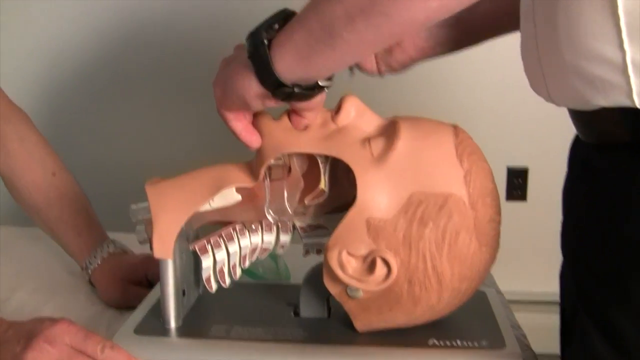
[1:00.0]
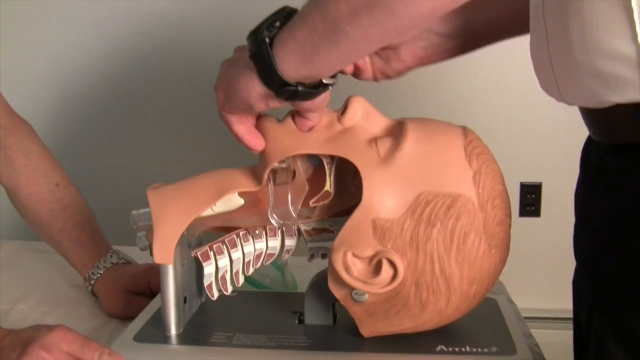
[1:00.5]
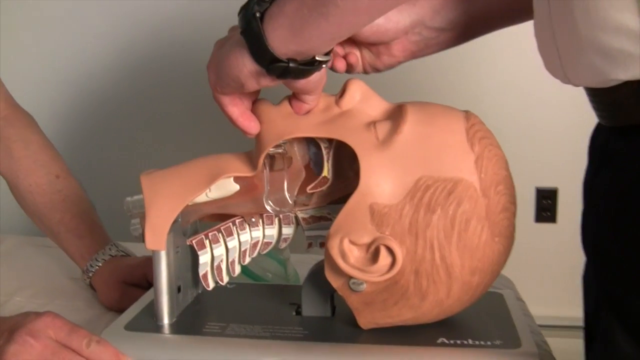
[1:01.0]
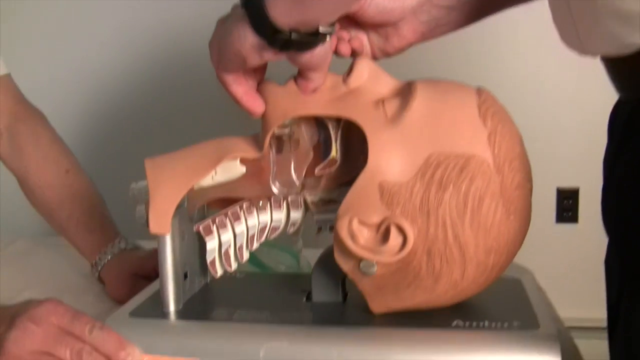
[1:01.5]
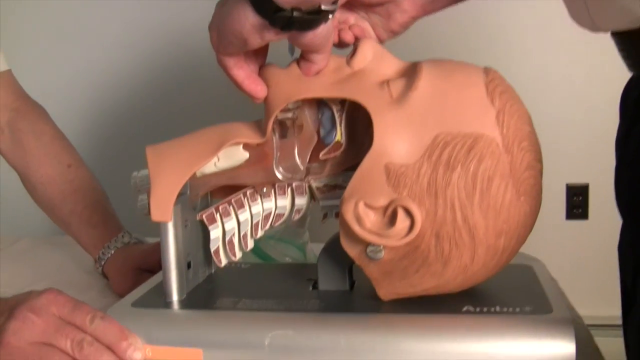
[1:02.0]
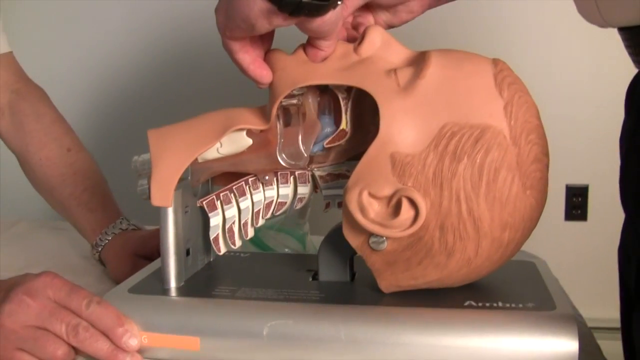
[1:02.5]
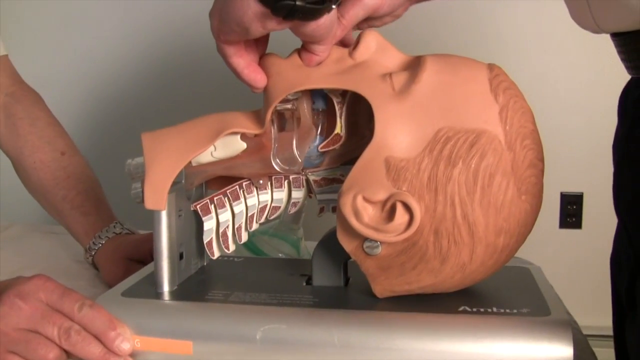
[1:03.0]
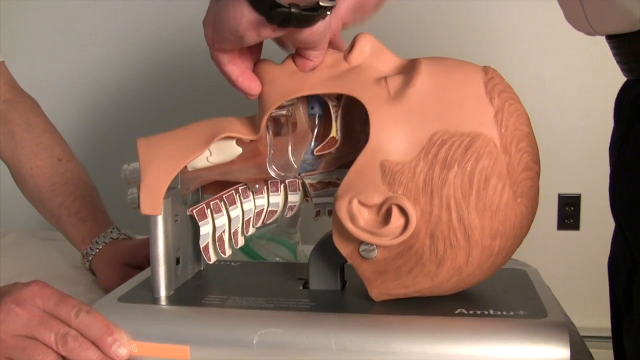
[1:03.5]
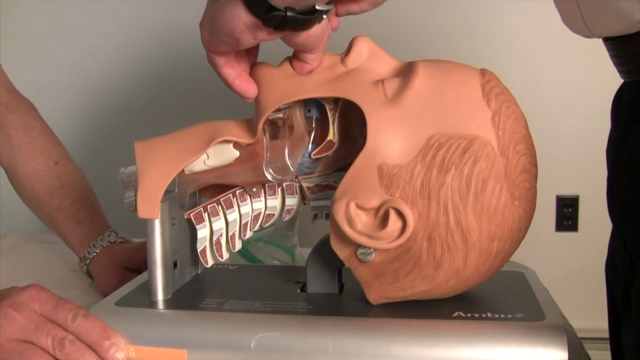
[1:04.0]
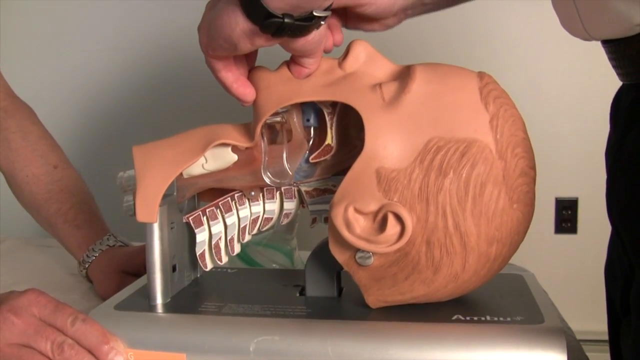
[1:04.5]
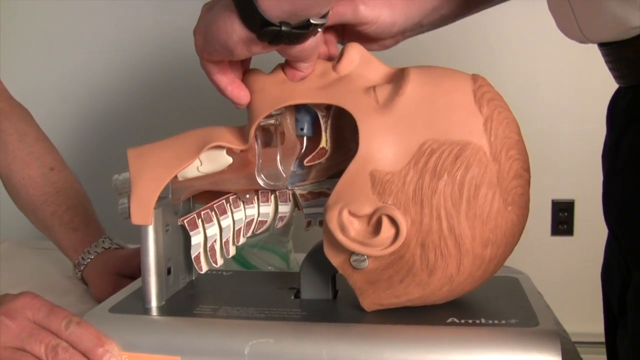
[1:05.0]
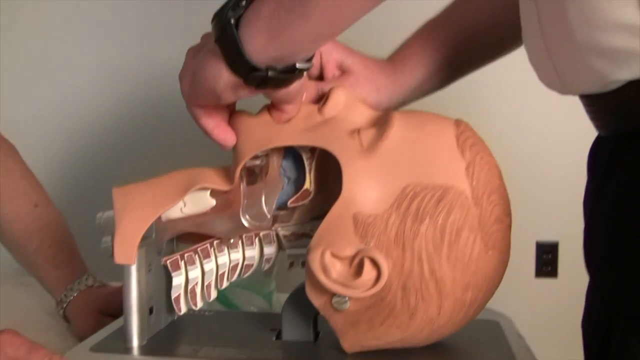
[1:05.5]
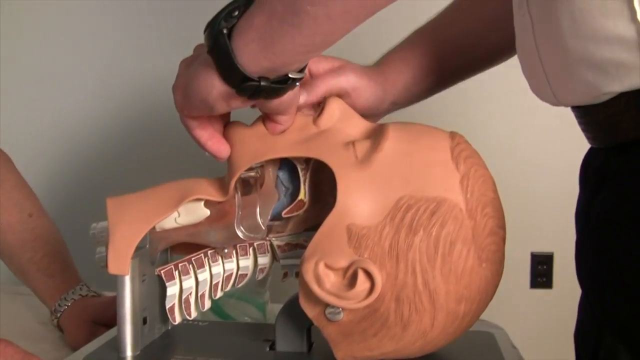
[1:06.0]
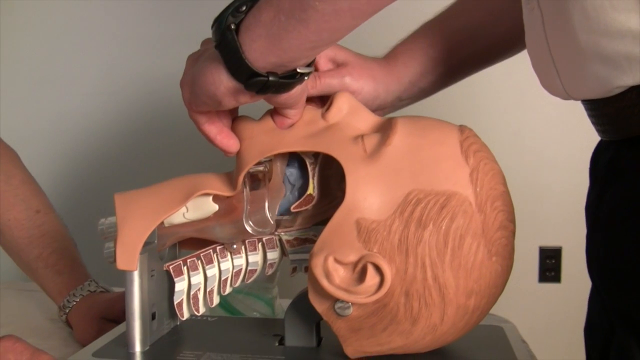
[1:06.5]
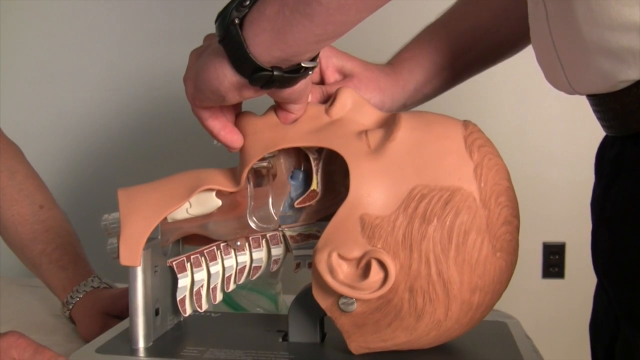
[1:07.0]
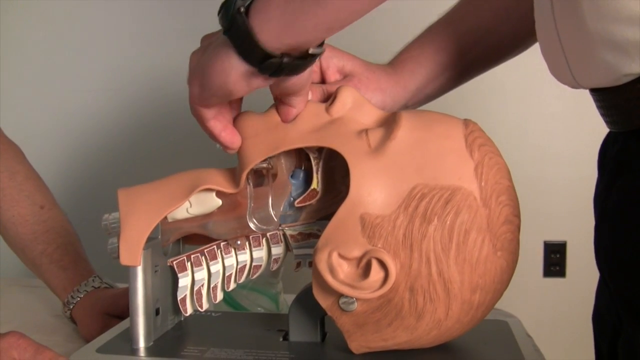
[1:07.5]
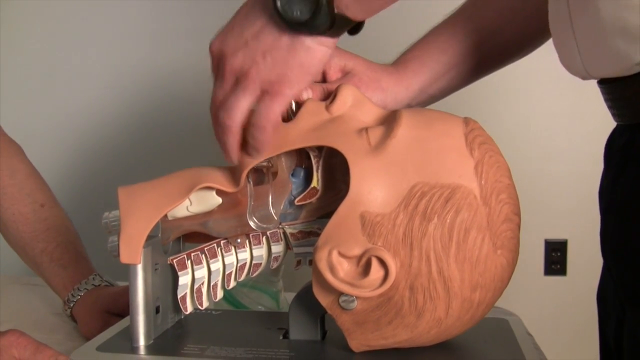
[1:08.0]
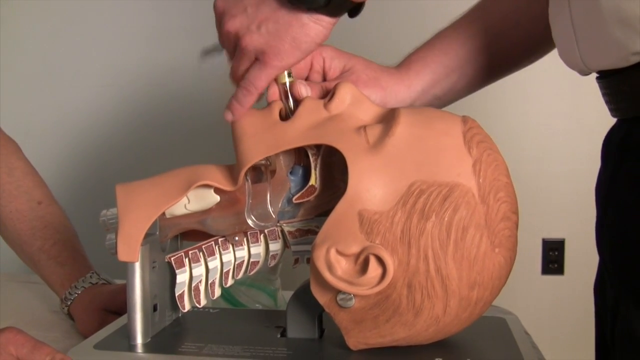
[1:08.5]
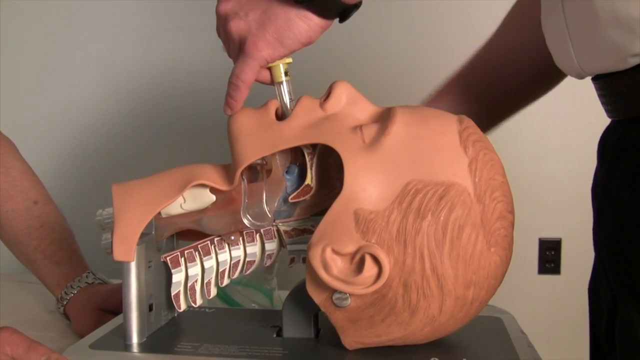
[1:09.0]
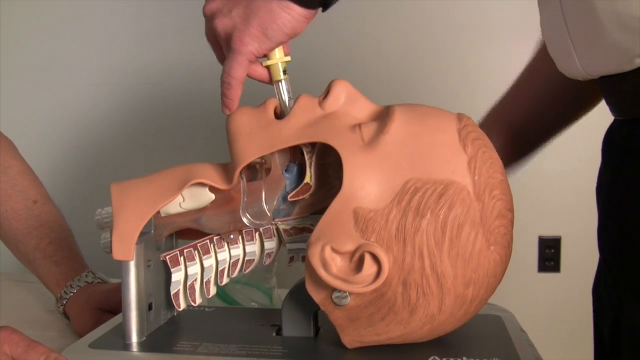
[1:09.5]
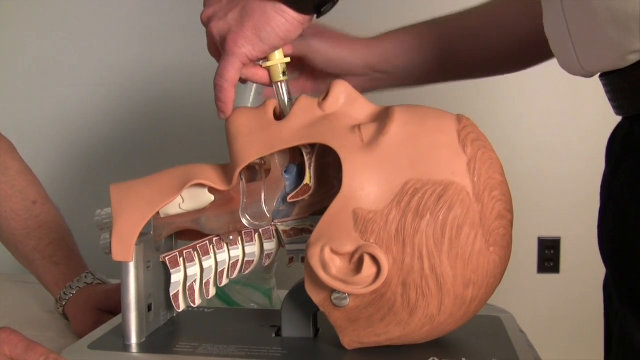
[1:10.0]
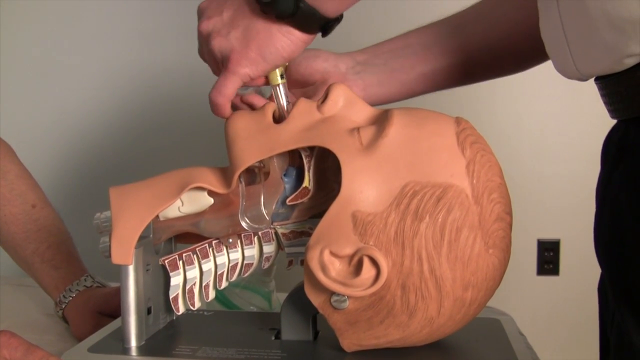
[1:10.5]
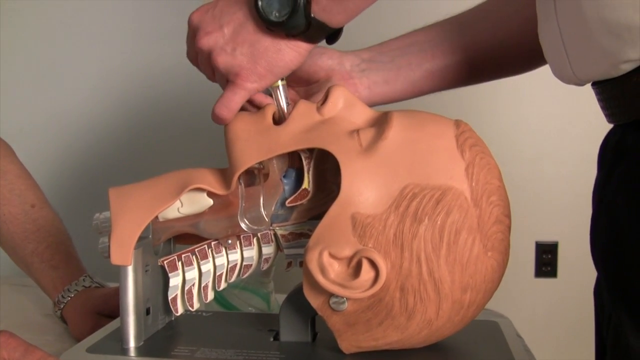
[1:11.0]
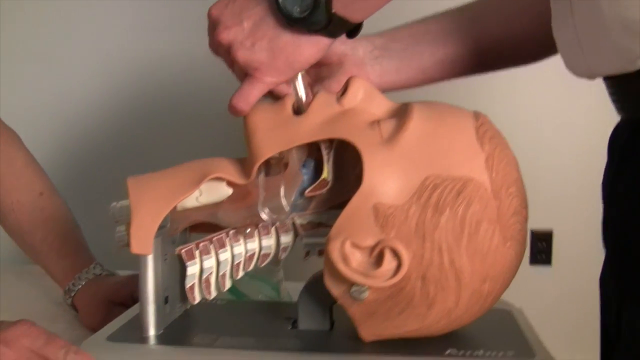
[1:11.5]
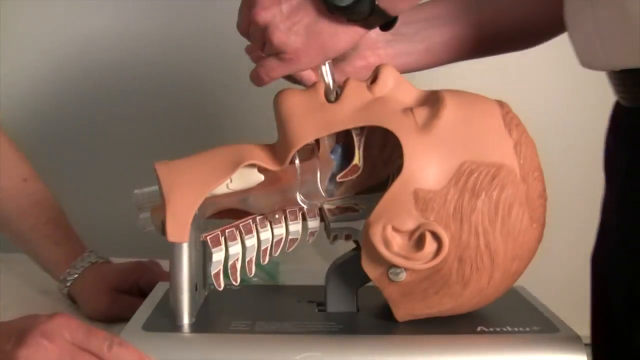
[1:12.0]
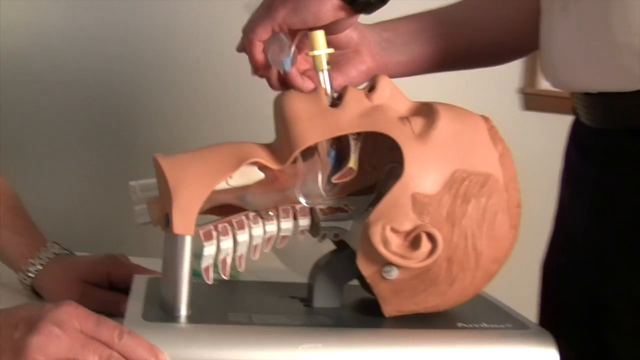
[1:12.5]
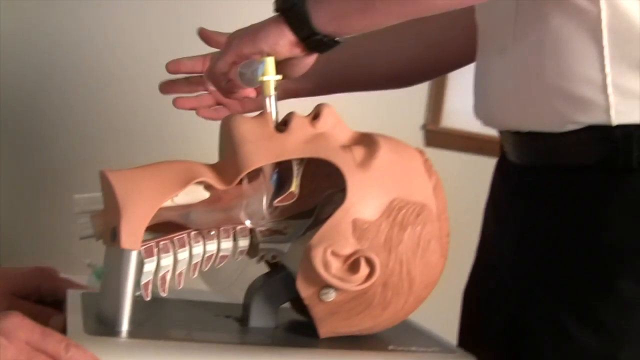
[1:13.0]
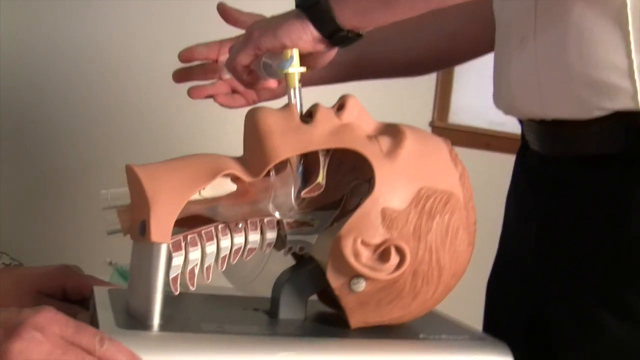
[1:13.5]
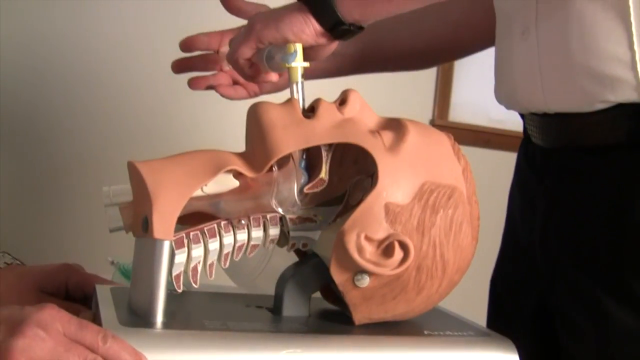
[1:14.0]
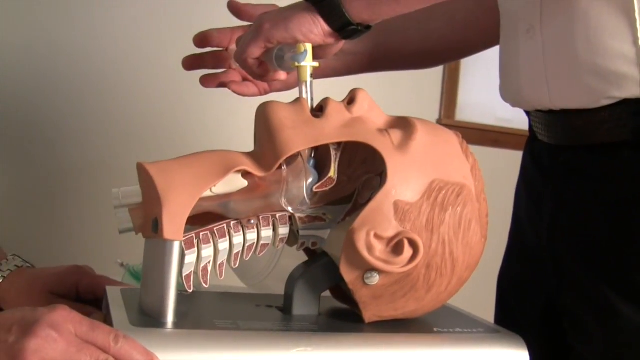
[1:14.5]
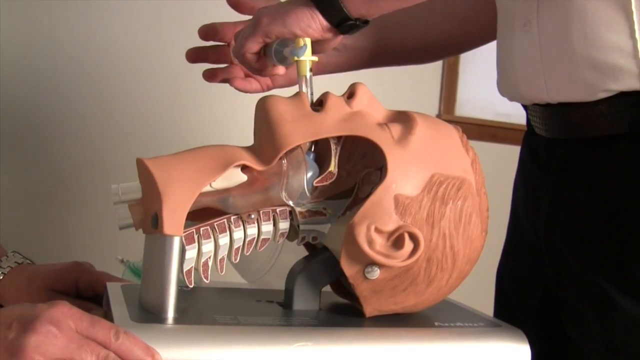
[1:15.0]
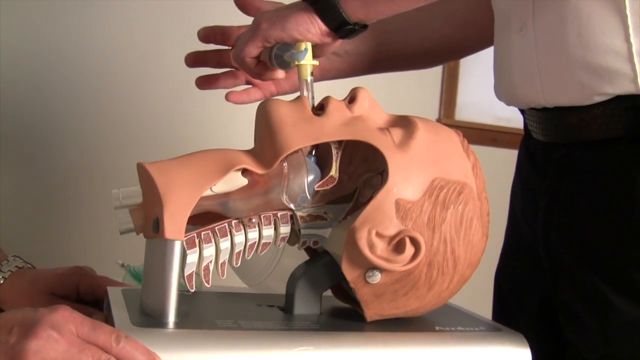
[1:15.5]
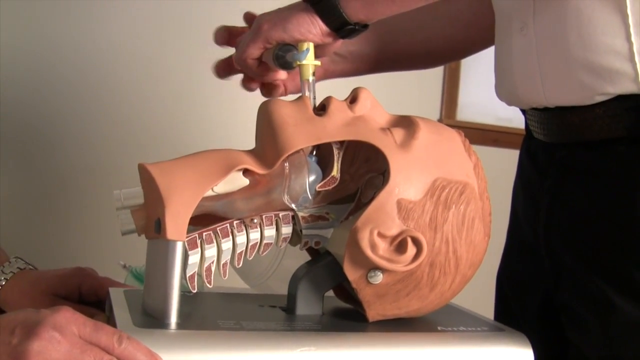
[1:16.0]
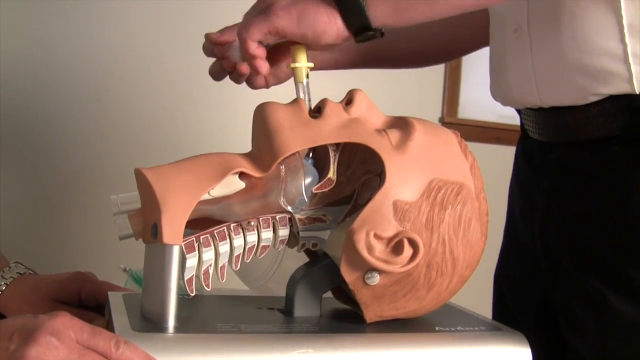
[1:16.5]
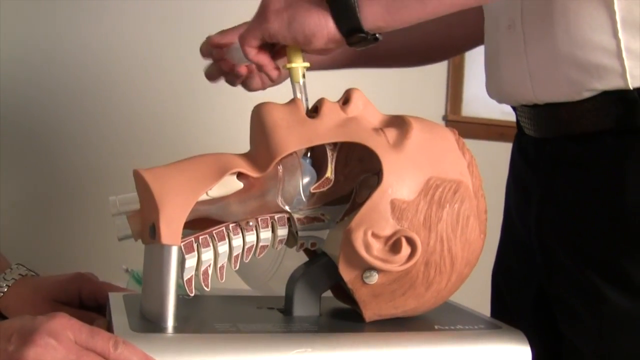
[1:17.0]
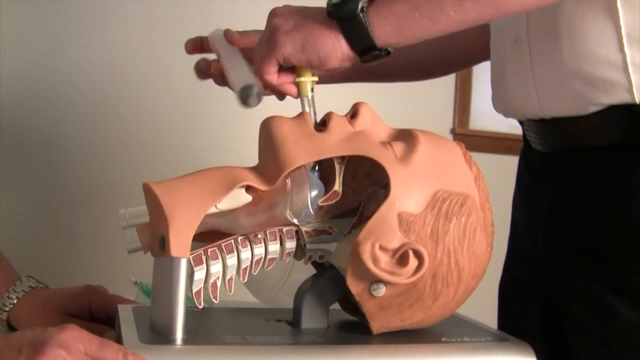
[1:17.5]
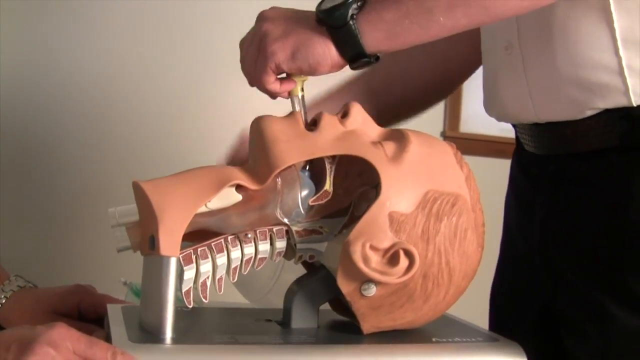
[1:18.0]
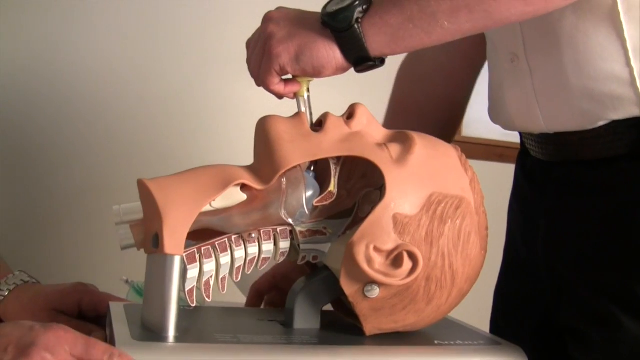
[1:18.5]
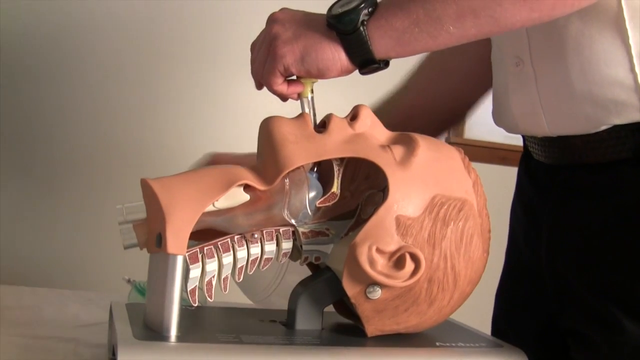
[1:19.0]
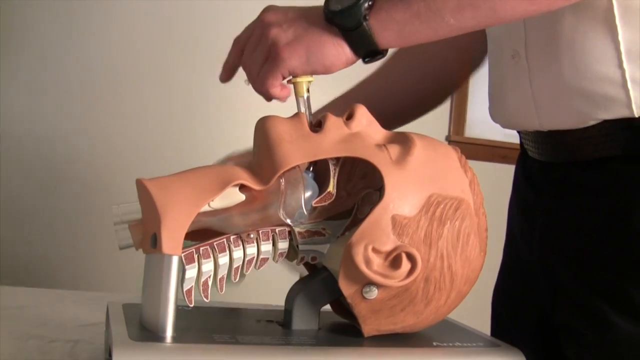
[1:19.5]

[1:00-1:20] A mannequin head in the middle of the frame looks upwards, viewed from its left side. The left cheek has been cut out all the way to the bottom of the left ear, to the back of the head and down to the bottom of the throat, so the inside of the head is visible. There appears to be a fake spine going down it, and there appear to be some transparent tubes in the mouth area. On the right side, a man's body faces left and down toward the mannequin. His left hand is inside the mannequin's mouth, with his thumb in the mouth, and he appears to hold something in his right hand. On the left side there appears to be another pair of hands, left and right, holding the base of the mannequin steady. The man appears to stuff what looks like a tube deep down the mannequin's throat, and it can be seen going down through the cutout in the cheek. He then does something with his right hand and starts pumping: he attaches some sort of tube to the end of the tool inside the mannequin's mouth and pushes inward with his right hand on what looks like a pump. Something appears to expand in the mannequin's throat. He puts the pump down with his right hand. The video pans to the left, looking from the bottom up from the mannequin's left cheek. The man appears to put down the syringe with his right hand and pick up something that looks like a respirator mask.